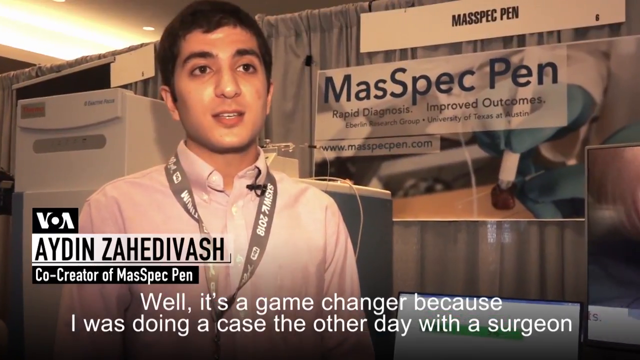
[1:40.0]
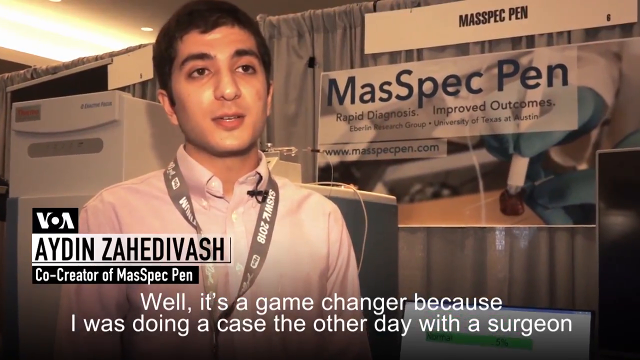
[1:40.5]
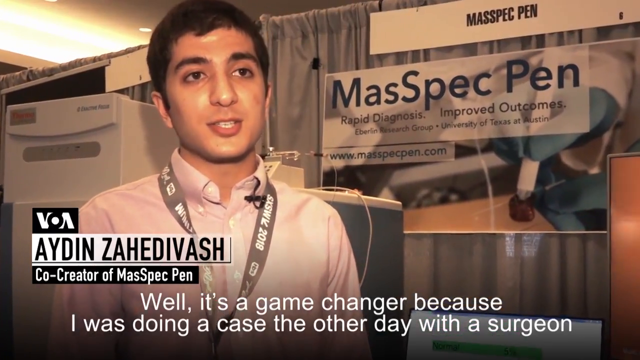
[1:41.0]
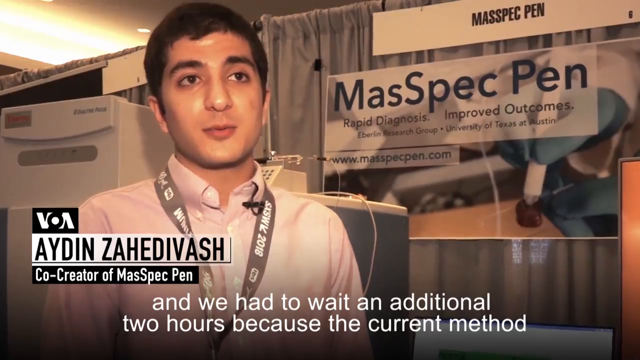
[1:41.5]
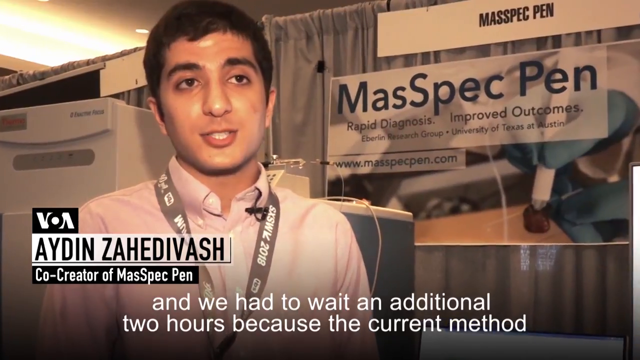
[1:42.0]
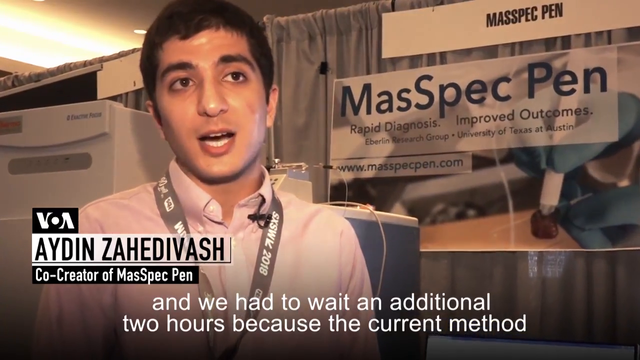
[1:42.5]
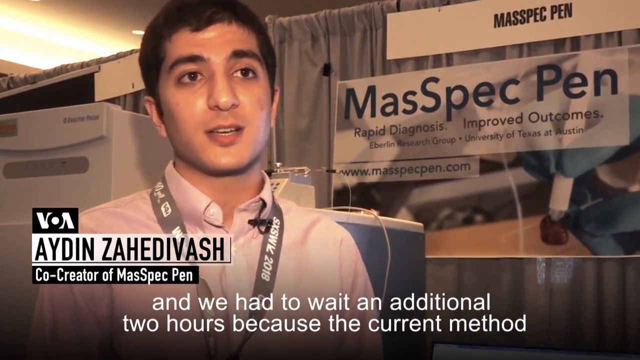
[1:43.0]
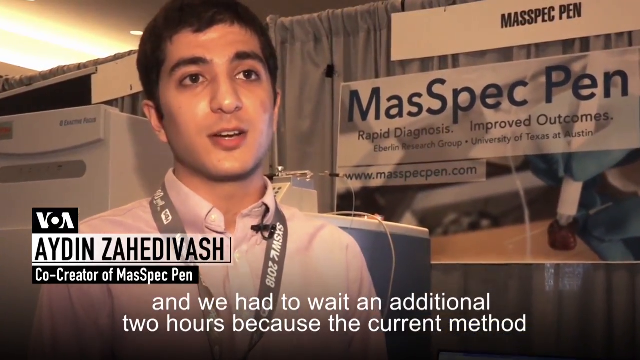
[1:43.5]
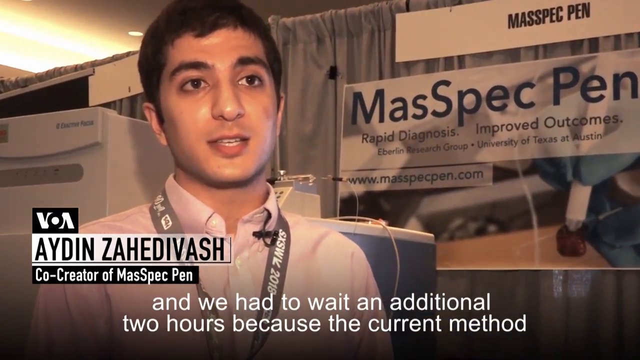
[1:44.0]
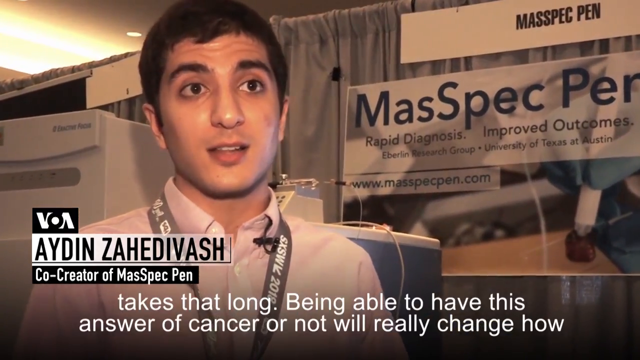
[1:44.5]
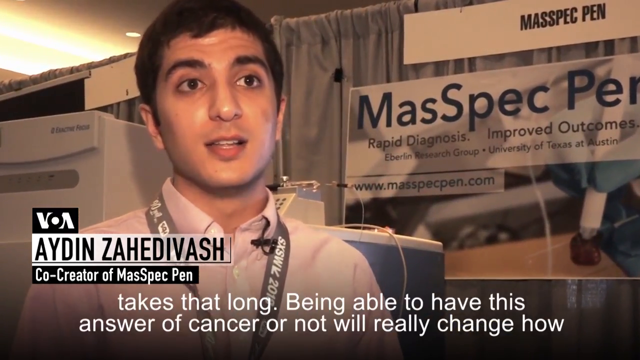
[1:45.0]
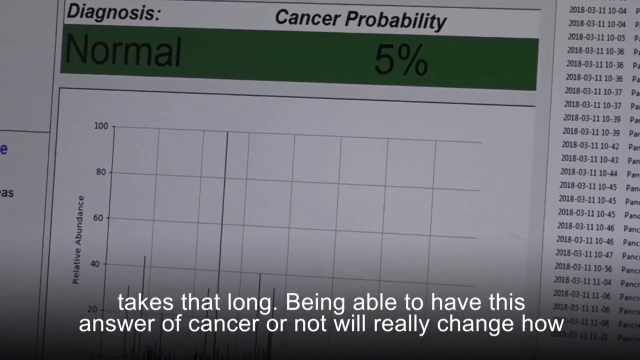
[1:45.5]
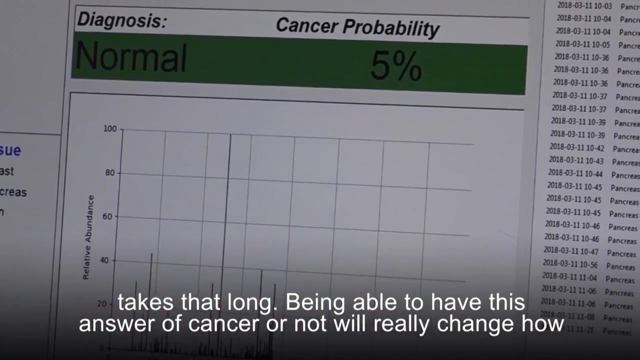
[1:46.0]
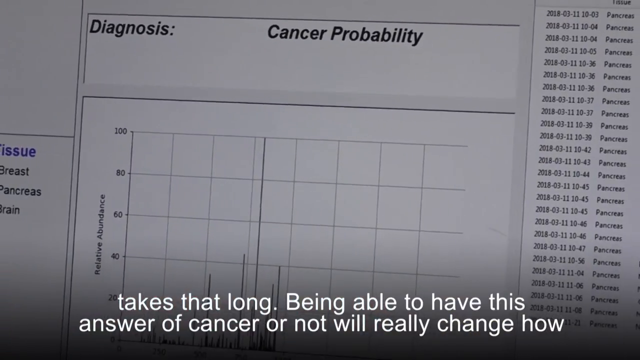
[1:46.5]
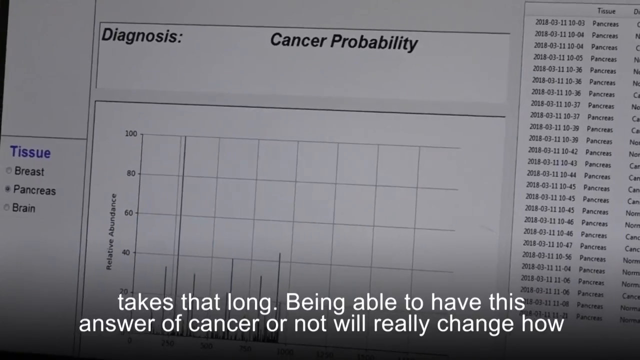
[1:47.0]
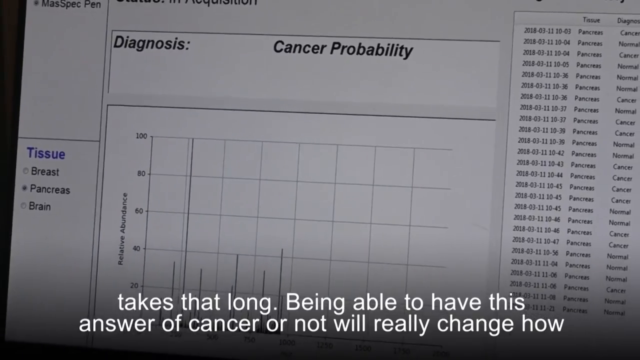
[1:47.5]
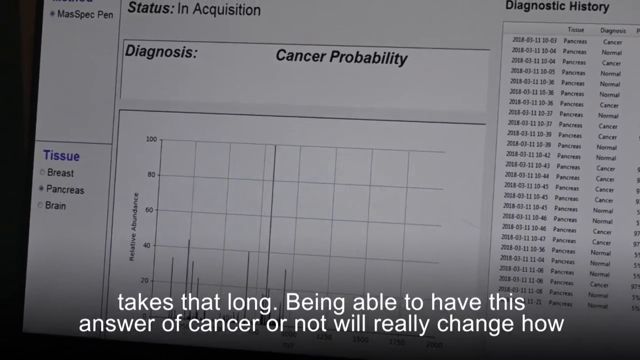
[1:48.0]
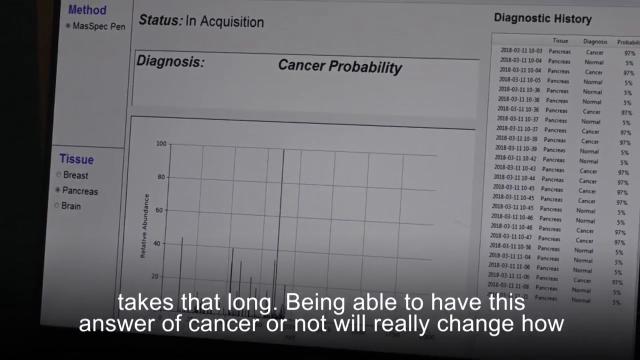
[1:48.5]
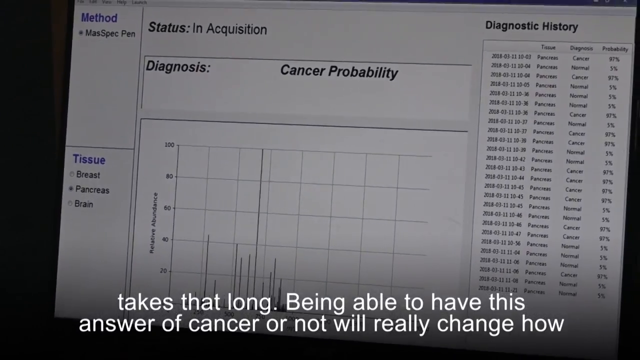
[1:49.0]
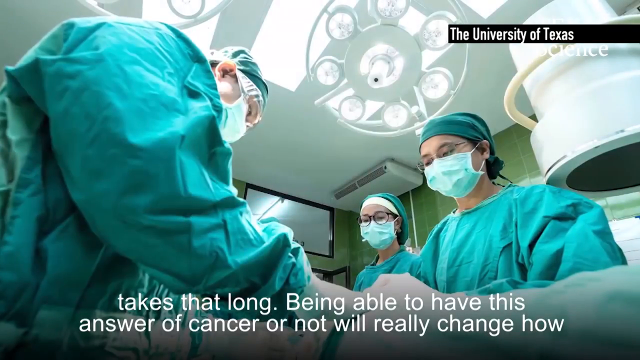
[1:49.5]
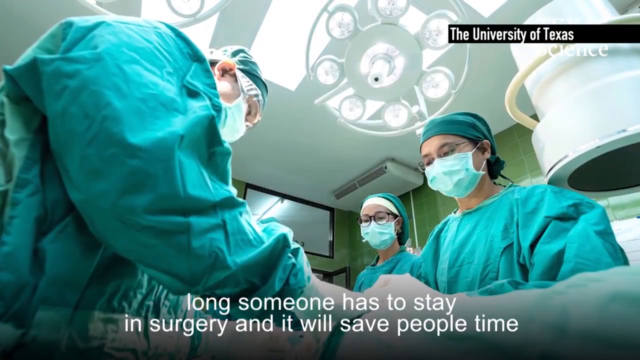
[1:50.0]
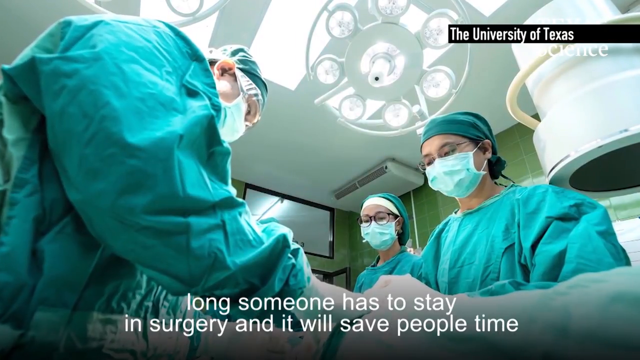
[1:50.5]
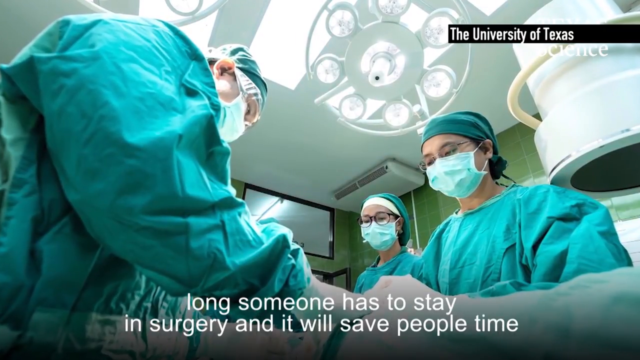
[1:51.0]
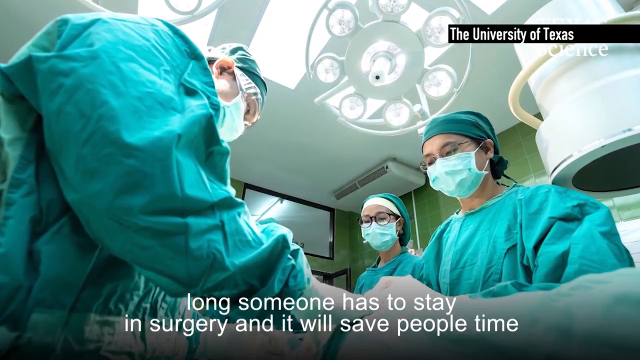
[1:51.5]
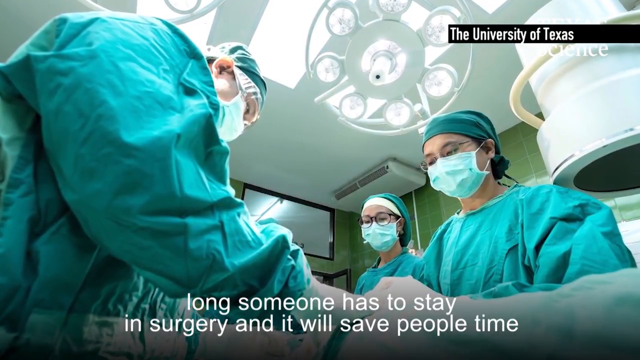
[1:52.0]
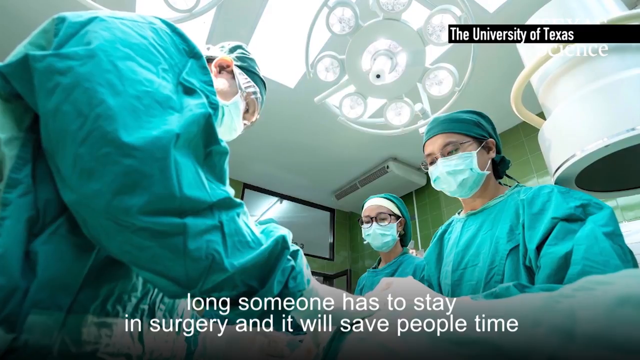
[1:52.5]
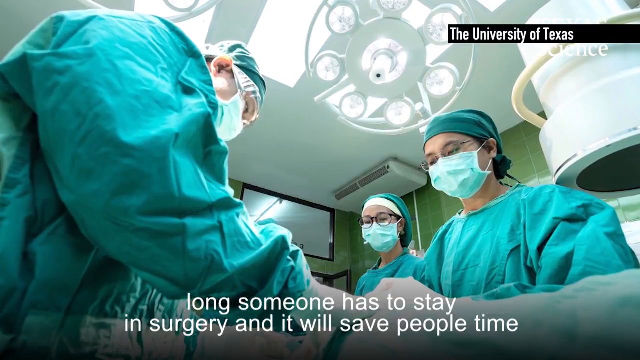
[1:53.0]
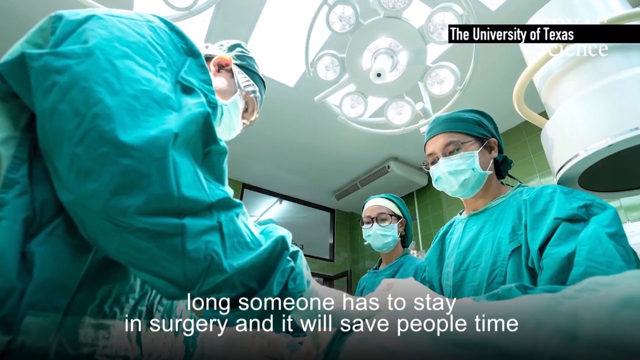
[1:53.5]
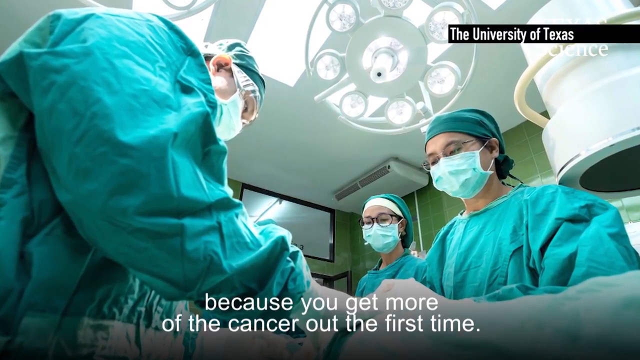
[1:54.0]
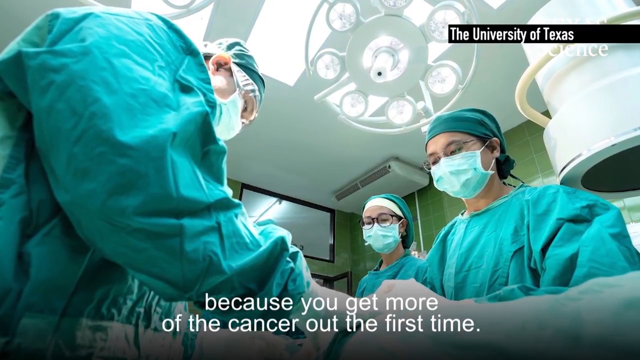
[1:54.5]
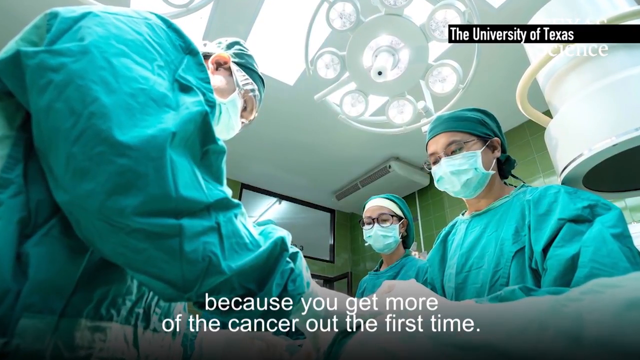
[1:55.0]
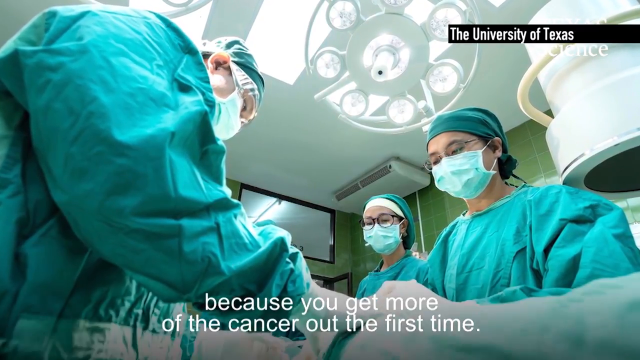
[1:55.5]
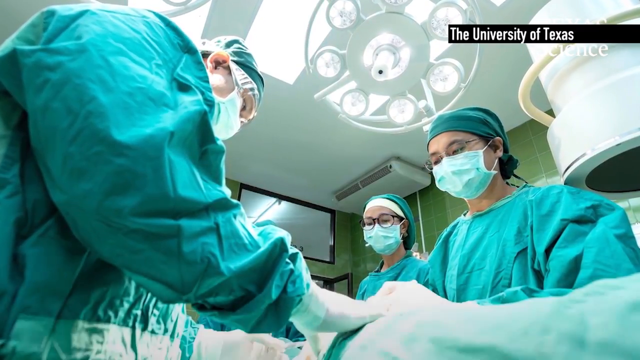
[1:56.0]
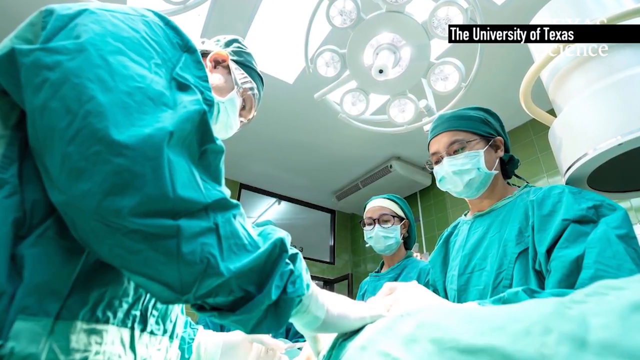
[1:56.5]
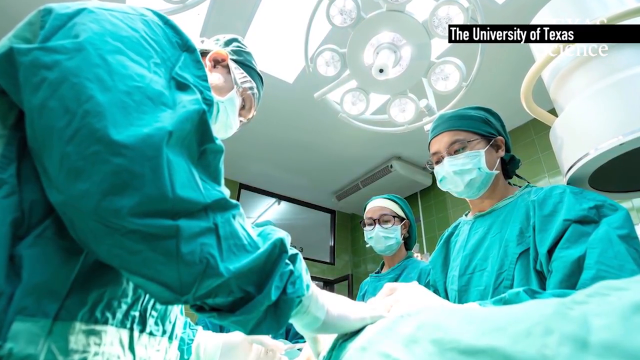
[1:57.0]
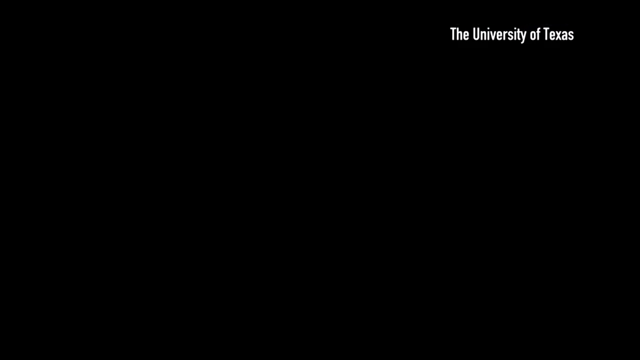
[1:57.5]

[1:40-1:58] A light brown-skinned young man with short brown hair wears a creamy off-white collared shirt with a gray strap over his neck bearing white letters and numbers. On the left side, a black box reads "VA" in white with a white dot in the center. Below that, a white box gives his name, "Aiden Zabhadishvash," with a black line underneath, and a black box below that says "co-creator of MassSpecPen" in white lettering. The white text below says "well, it's a game changer because I was doing a case the other day with a surgeon." Behind him are an off-white box on the left side and a bluer box over his left shoulder, with a gray curtain behind him. A white banner at the top right says "MassSpecPen" in black text. The banner below, also off-white, says "MassSpecPen" in blue lettering, with black text below reading "Rapid Diagnosis Improved Outcomes" and "Eberlin Research Group, University of Texas at Austin." At the bottom left, blue text says "www.massspecpen.com." The text below changes to "and we had to wait an additional two hours because the current method takes that long. Being able to have this answer of cancer or not will really change how." The screen then changes to the off-white computer screen. In the center, black text says "status and acquisition," and below that, on a white background, "diagnosis, cancer probability." The next box below, at an angle, says "relative abundance," and in the black-outlined box the numbers running from top to bottom read "180, 60, 40, 20." At the far right, black text reads "diagnostic history," with four rows running down and columns for tissue, diagnosis and probability: dates, the named tissue (pancreas in this case), a diagnosis that changes back and forth between cancer and normal, and the probability percentages, all in black text. At the top left, blue text reads "method," with "mass spec pen" below it. The next box down, separated by a black line, reads "tissue" in blue, with black text below running top to bottom reading "breast, pancreas, brain." The next image has a black box on the right with white lettering reading "the University of Texas" and shows a surgery room with a light gray wall and rounded white lights above. Three people wear teal-colored scrubs, hats and light teal-colored masks, and all of them wear glasses and white gloves. The lower section of the wall is a light green tile color. The text below changes to "long someone has to stay in surgery and it will save people time," and then to "because you get more of the cancer out the first time."